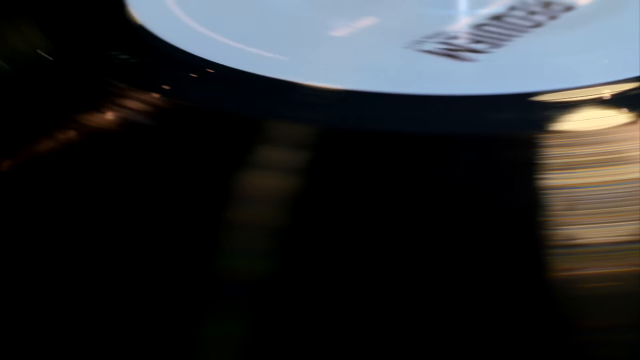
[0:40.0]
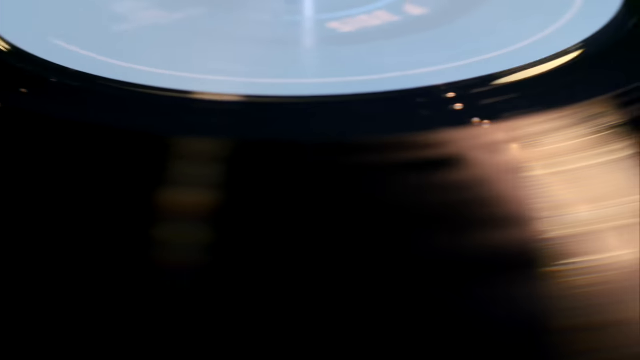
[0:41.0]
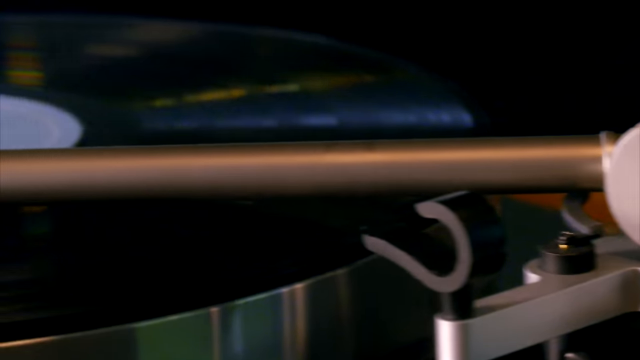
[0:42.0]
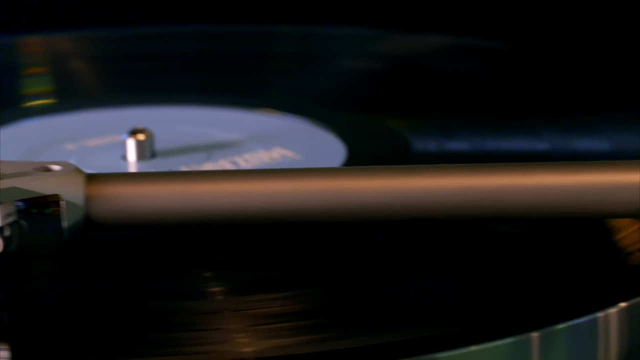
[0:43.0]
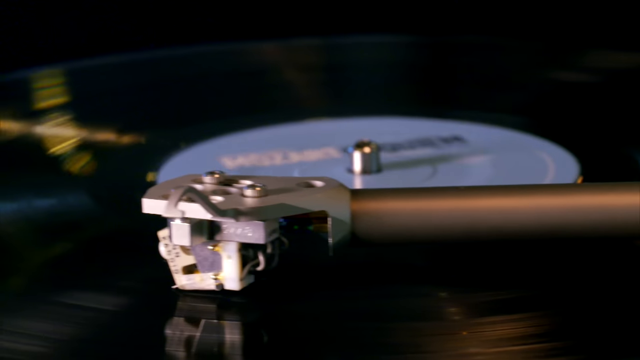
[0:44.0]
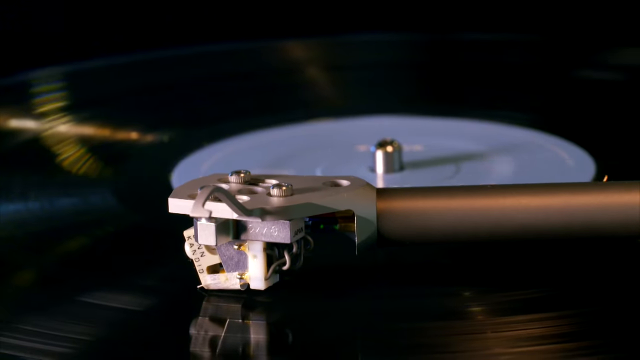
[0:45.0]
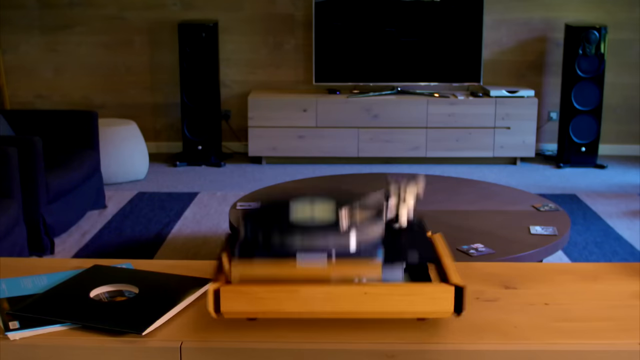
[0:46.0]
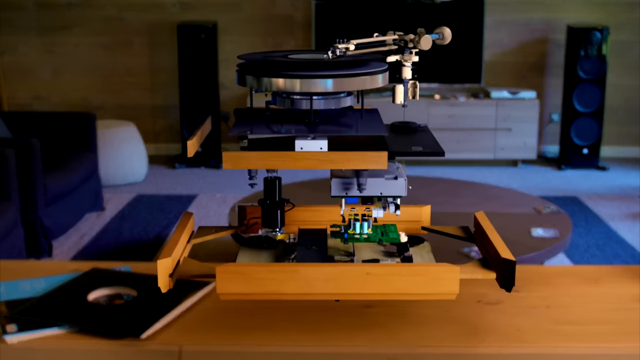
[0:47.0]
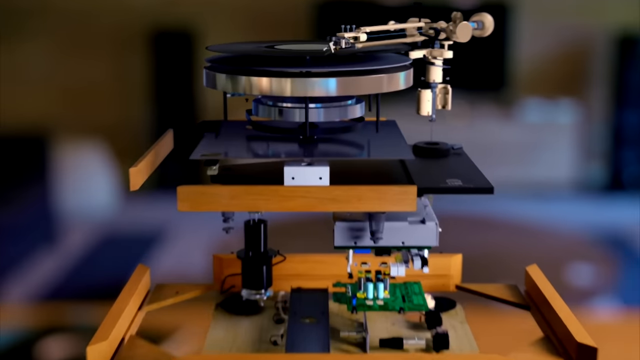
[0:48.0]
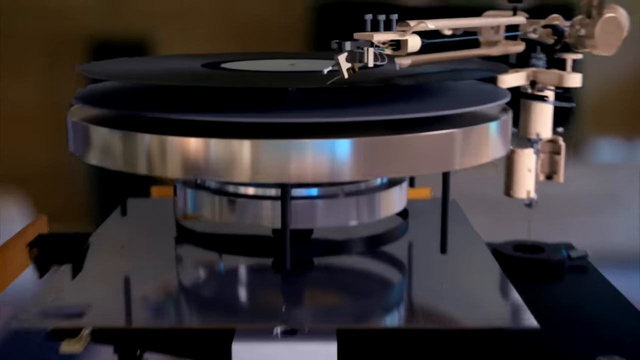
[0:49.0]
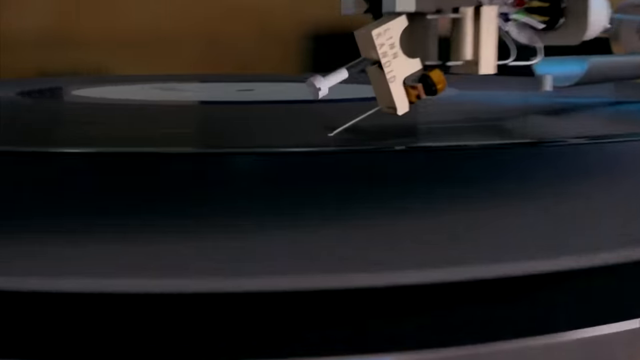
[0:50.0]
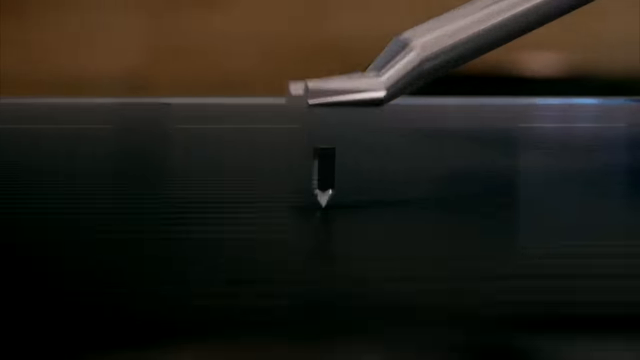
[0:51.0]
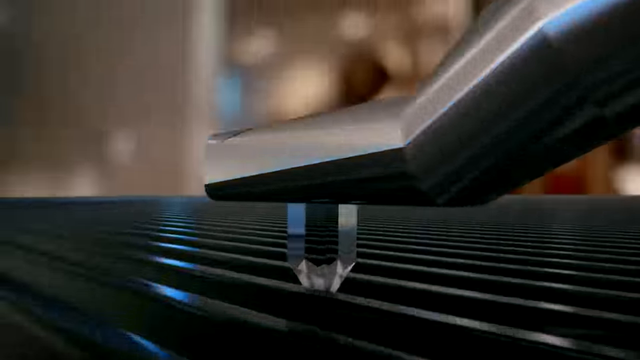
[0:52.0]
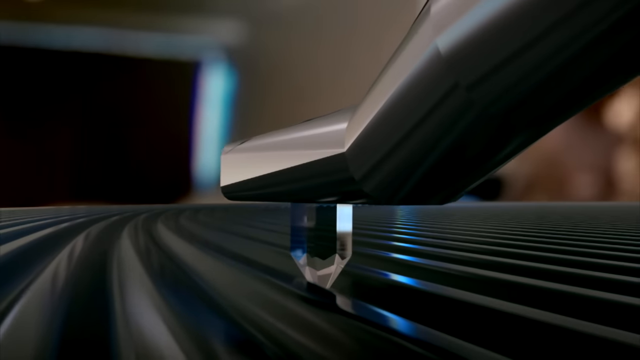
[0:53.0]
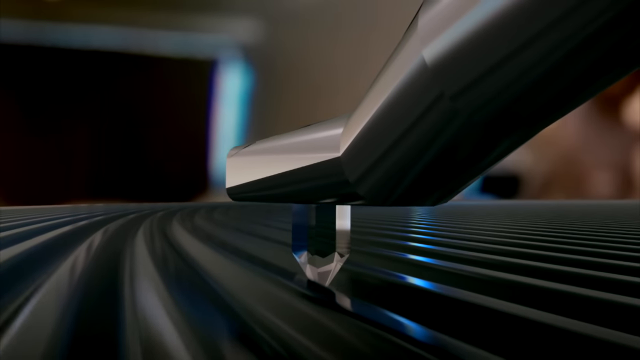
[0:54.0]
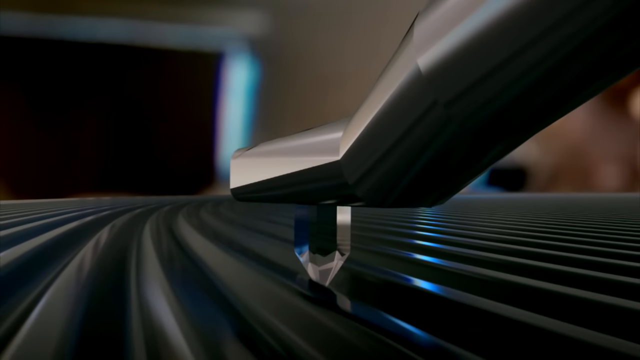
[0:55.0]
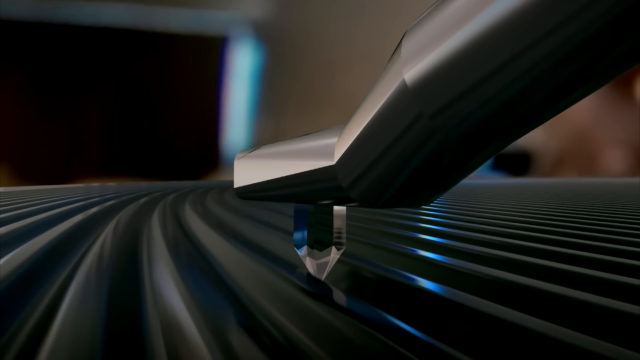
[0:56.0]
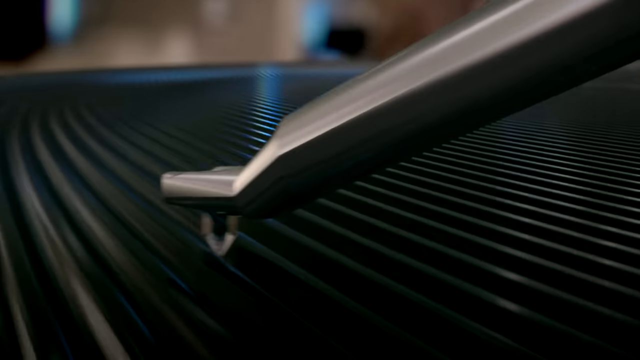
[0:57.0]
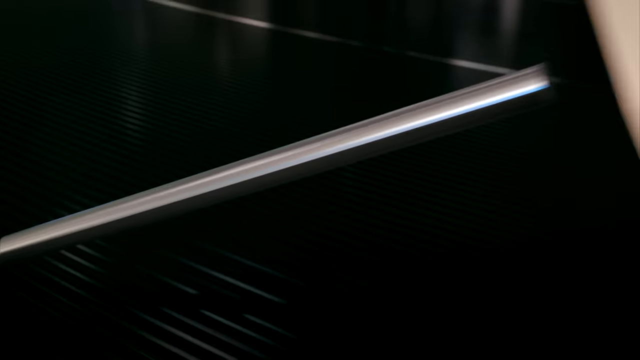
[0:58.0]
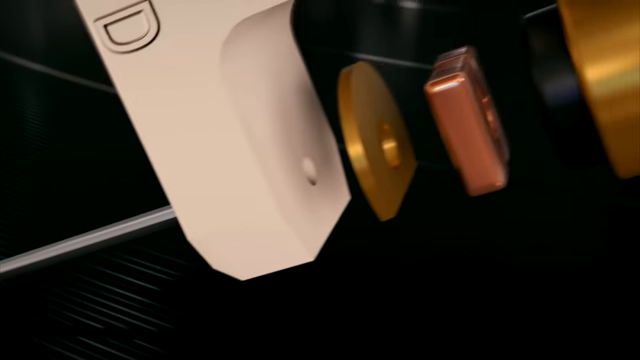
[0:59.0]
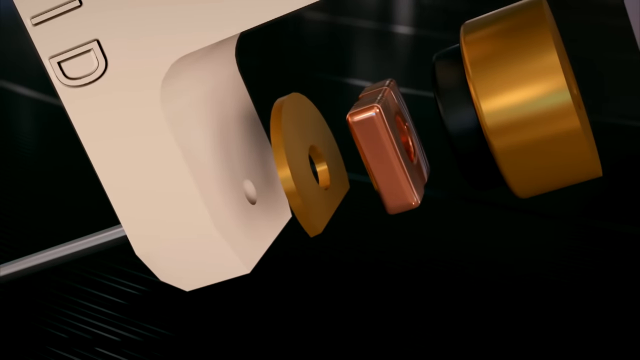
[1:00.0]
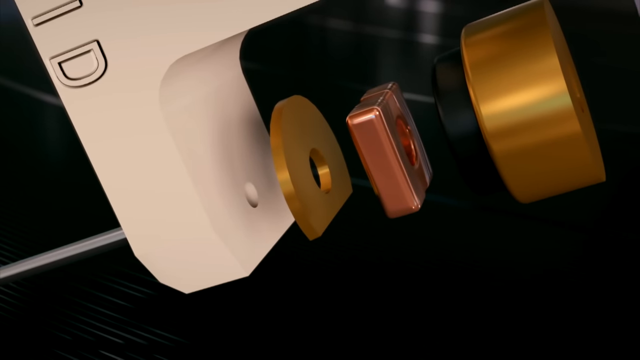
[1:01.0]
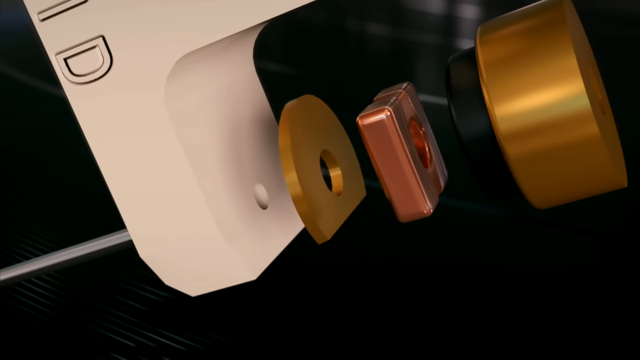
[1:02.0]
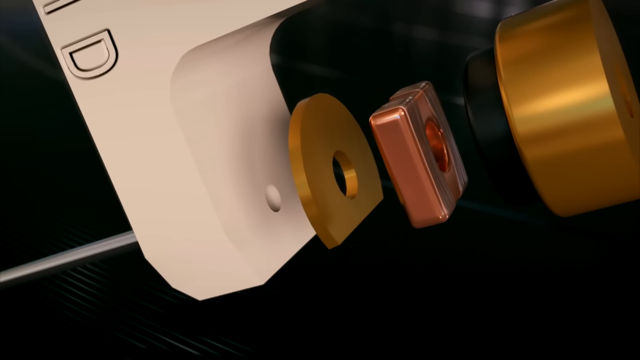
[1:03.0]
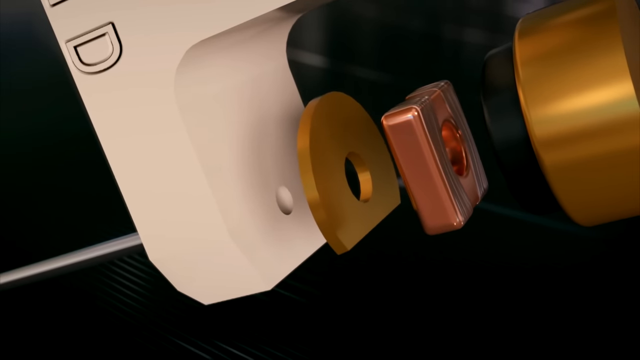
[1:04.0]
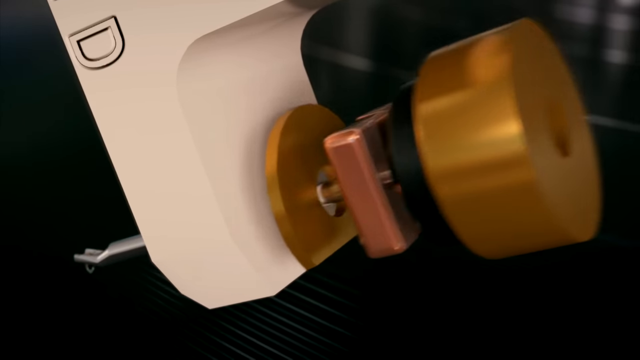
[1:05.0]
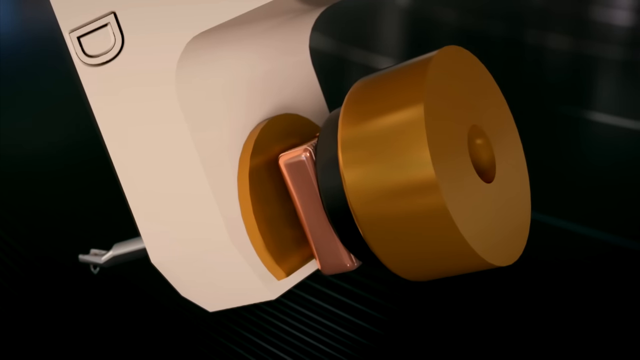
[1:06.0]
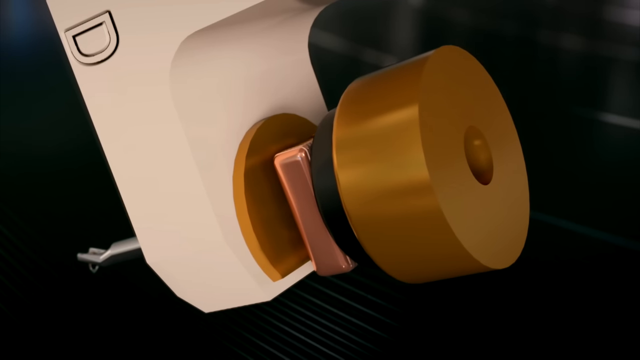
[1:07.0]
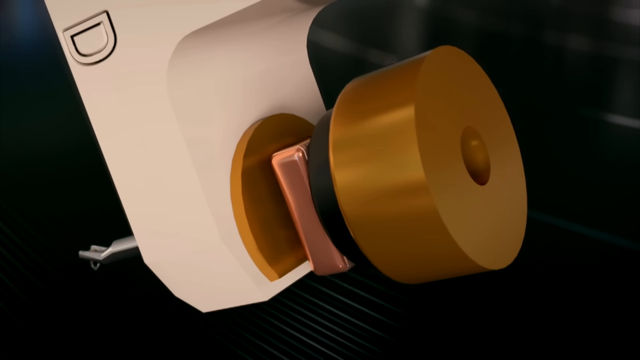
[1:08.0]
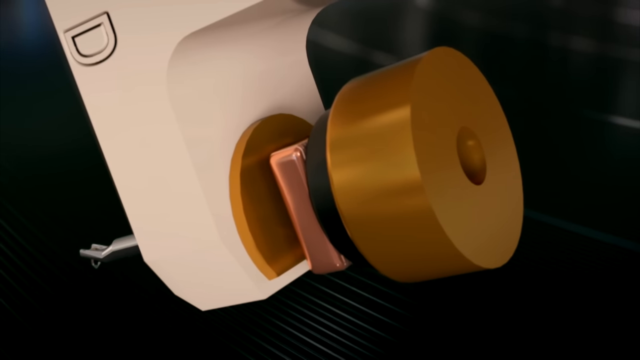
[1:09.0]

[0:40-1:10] A zoomed-in view of the record player being played continues, followed by a zoom in on its handle. An overhead-angle transition shows the record player in its normal form, and it is then expanded and exploded again to show all the intricate parts of its technology in a layered, compartment-style diagram. The view zooms again to the top of the record player, specifically to the handle, showing the crystal-clear edge that scratches the record so it can be played; it is seen moving along the ridges of the record as it plays. A further detailed zoom on the opposite side reveals the gold handles, compartments and technology that make up the handle in layers.